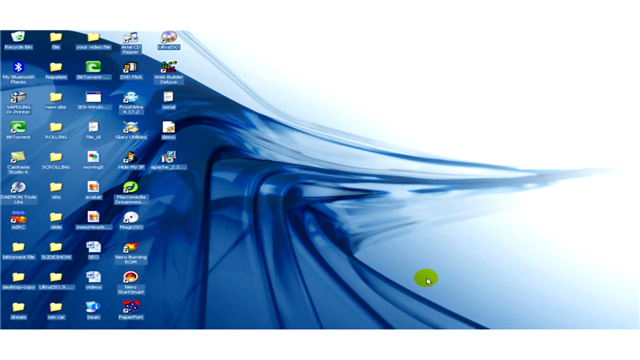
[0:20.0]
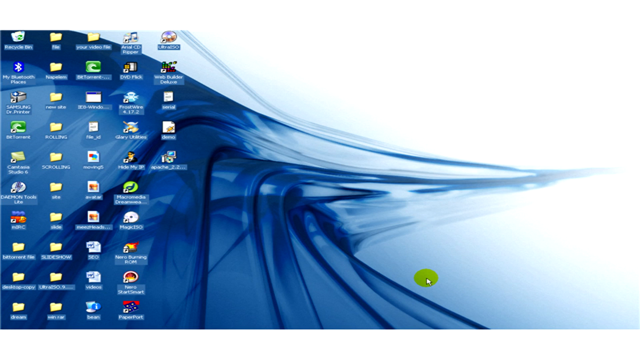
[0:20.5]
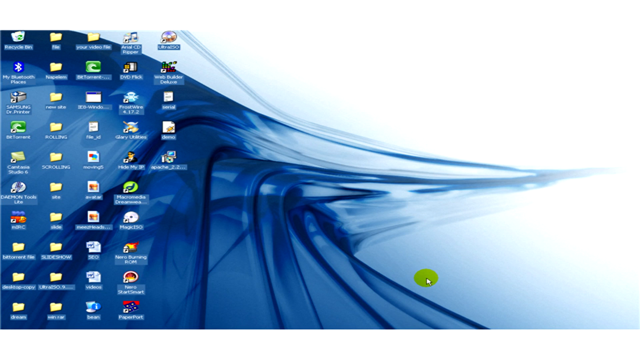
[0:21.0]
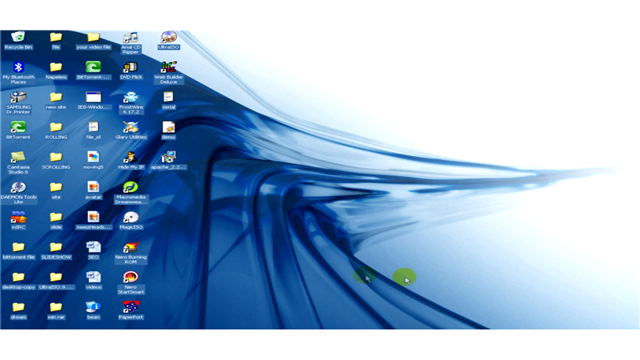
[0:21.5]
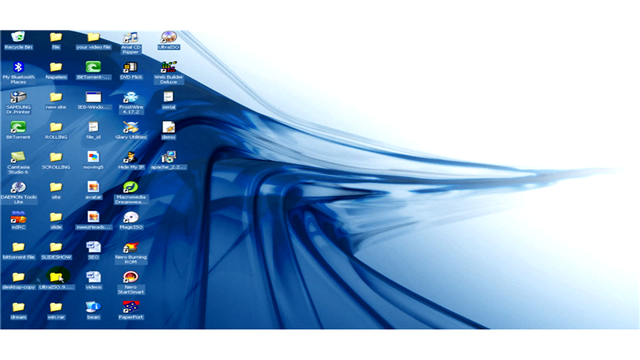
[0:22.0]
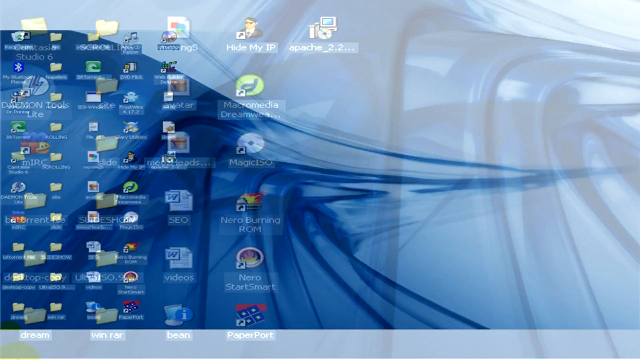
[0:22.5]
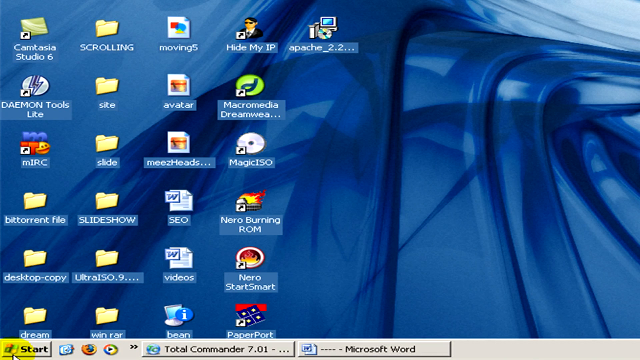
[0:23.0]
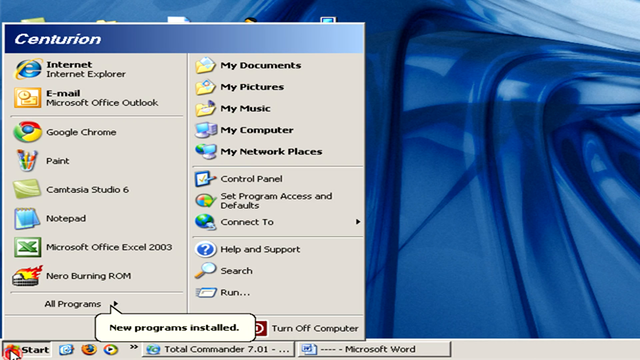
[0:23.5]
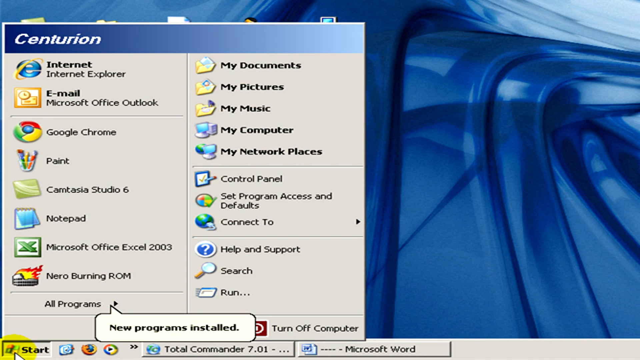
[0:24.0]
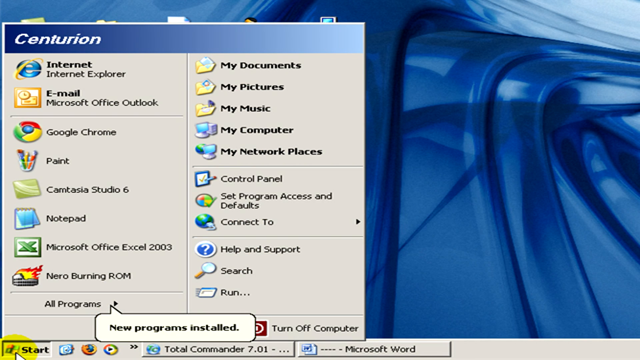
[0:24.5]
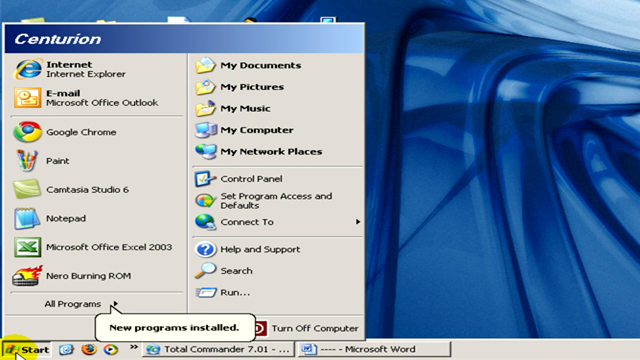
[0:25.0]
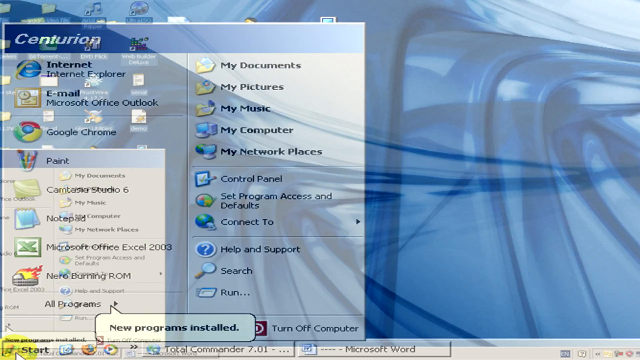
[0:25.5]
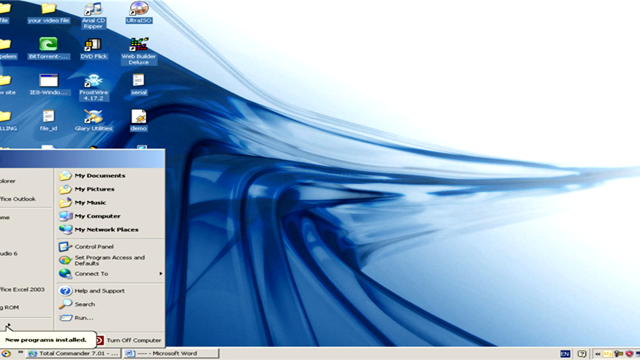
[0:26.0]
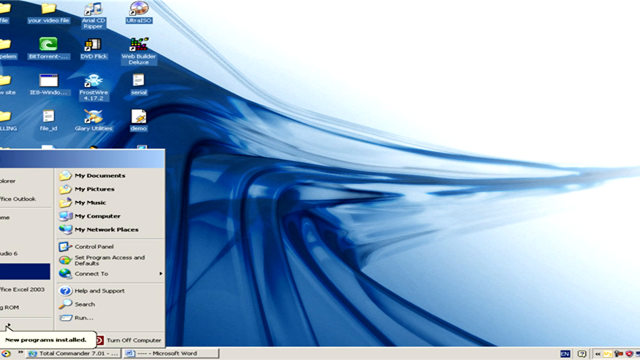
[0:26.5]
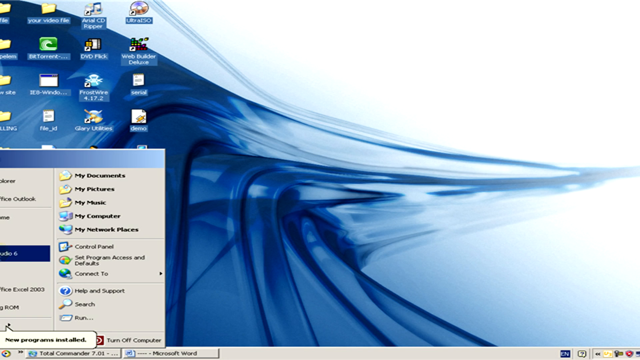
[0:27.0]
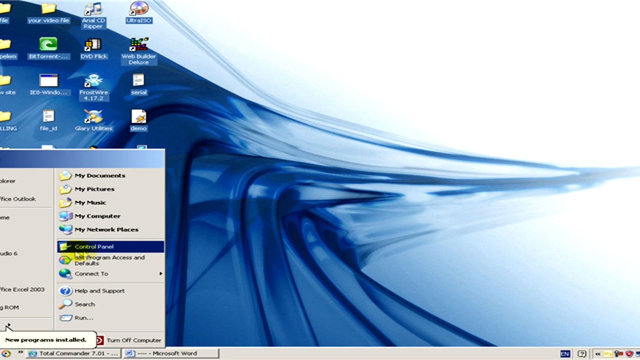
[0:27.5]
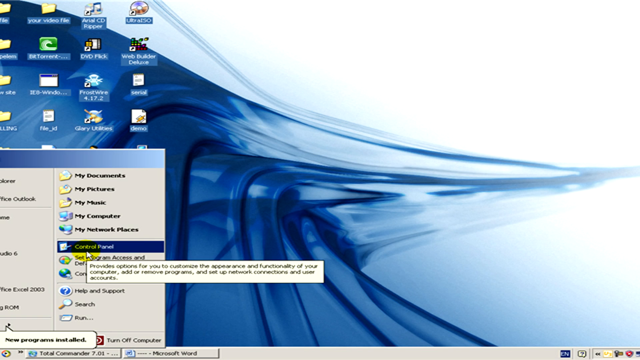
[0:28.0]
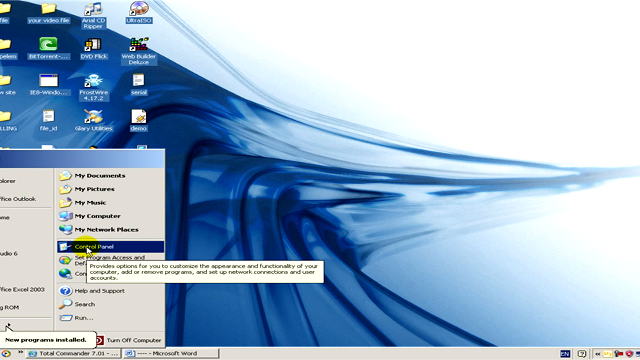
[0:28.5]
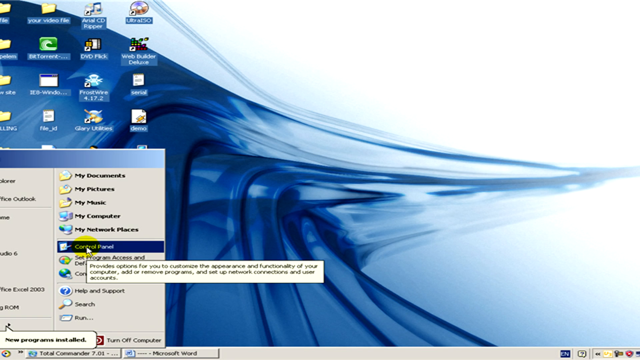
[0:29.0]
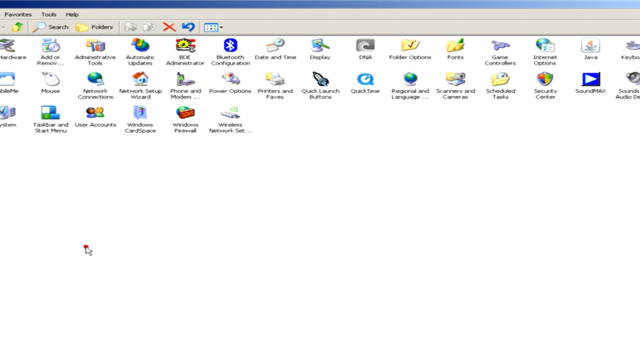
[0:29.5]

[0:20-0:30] The video switches to a screen share of the home screen of a laptop or computer, which has many applications and files on it. The person scrolls to the bottom left, clicks the Windows start button, and many different options pop up; they select the control panel. A screen then pops up listing many options, including "windows firewall", "windows user accounts", "taskbar and start menu", "quick time", "quick launch buttons", "printers and faxes", "power options", "regional and language", "scanners and cameras", "scheduled tasks", "security center", "java" and "internet options".